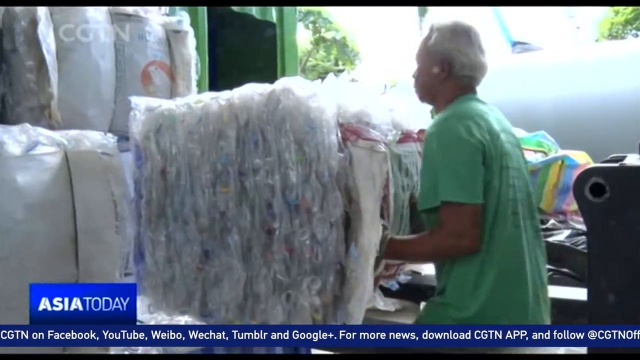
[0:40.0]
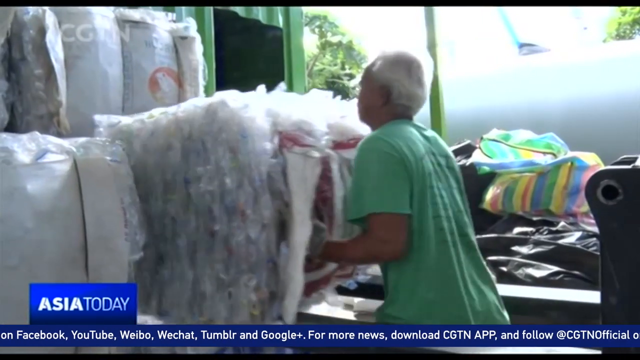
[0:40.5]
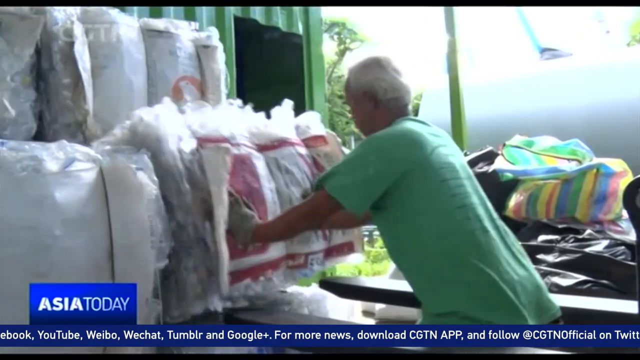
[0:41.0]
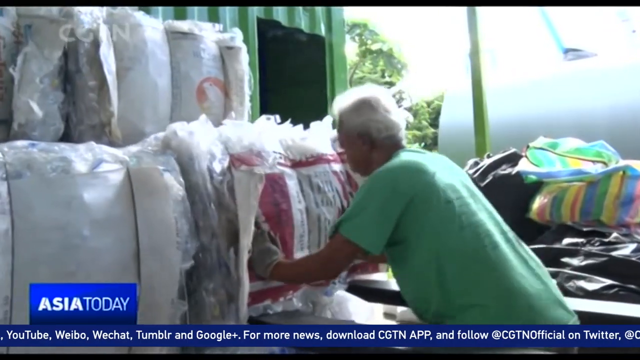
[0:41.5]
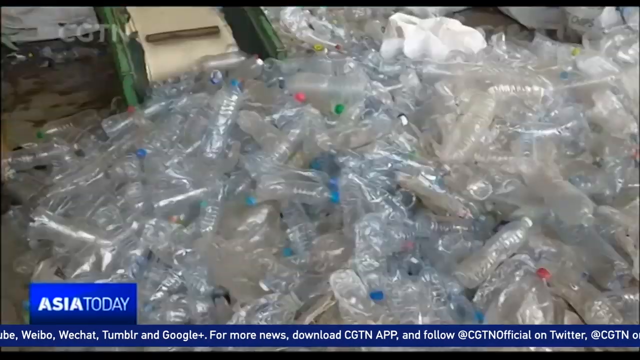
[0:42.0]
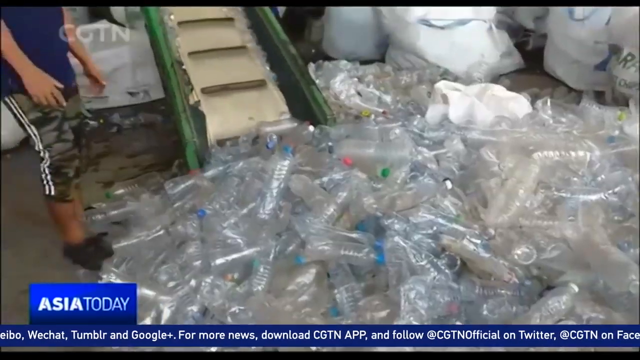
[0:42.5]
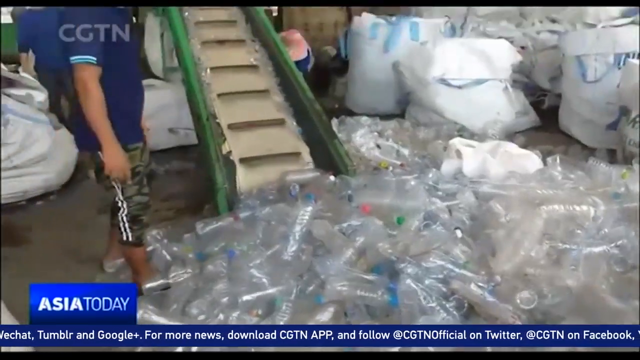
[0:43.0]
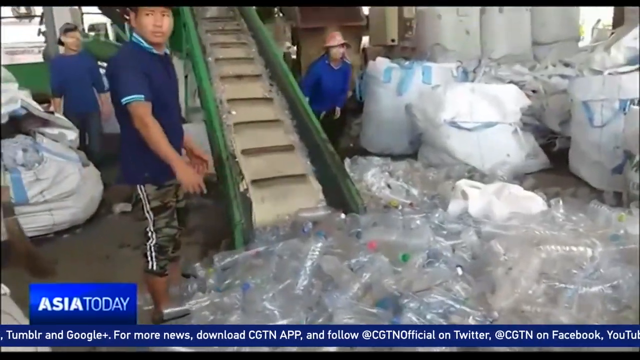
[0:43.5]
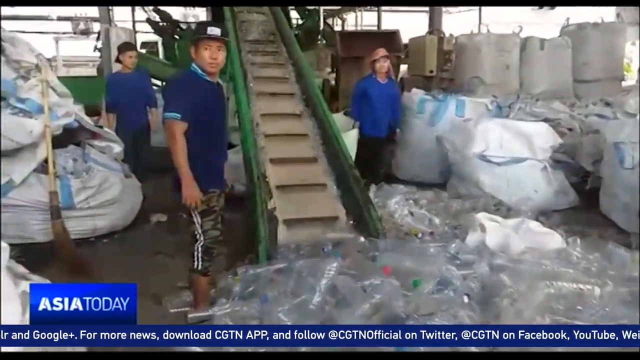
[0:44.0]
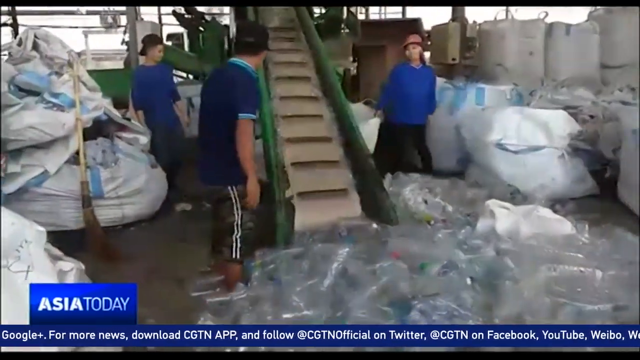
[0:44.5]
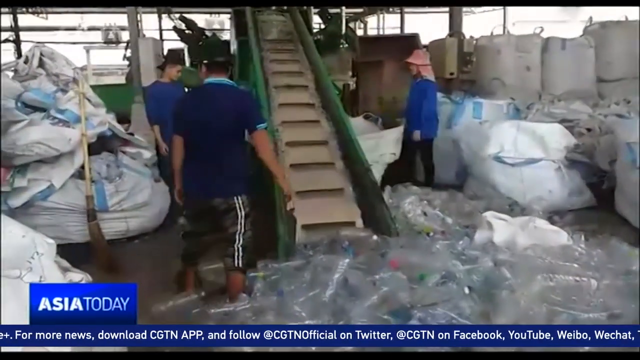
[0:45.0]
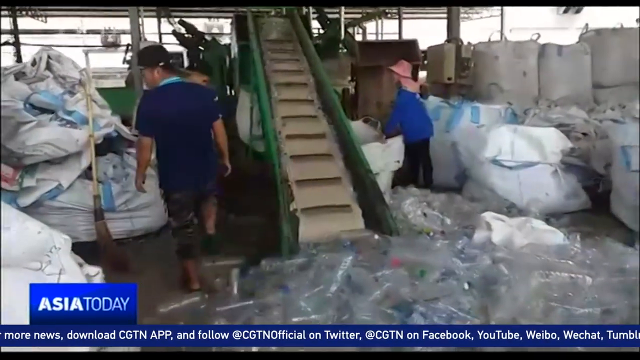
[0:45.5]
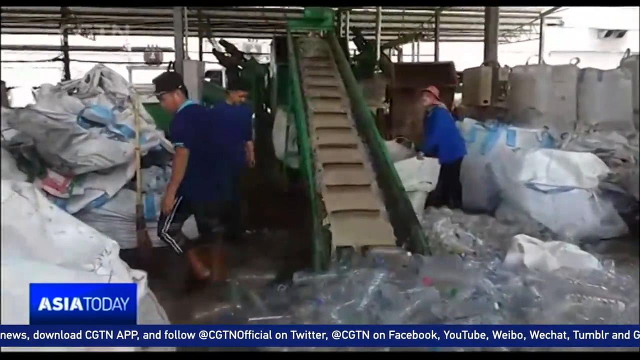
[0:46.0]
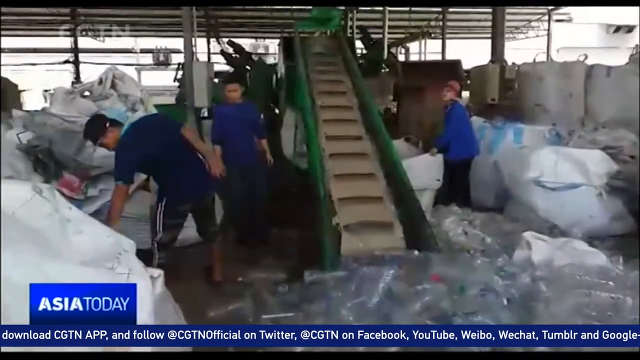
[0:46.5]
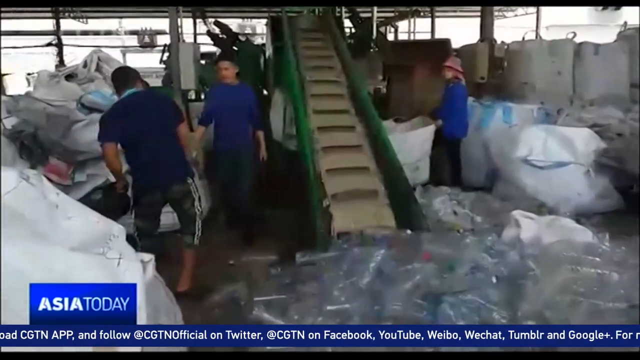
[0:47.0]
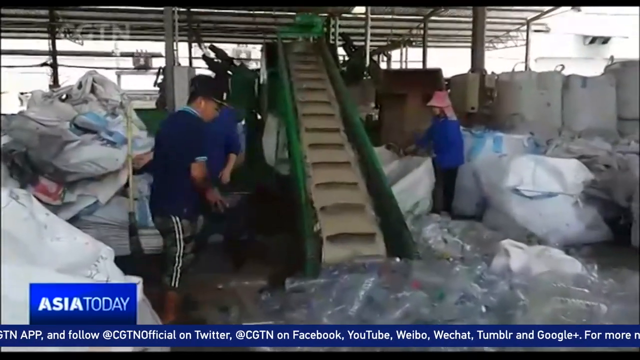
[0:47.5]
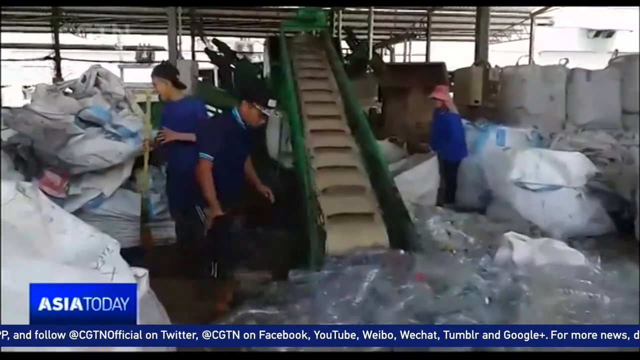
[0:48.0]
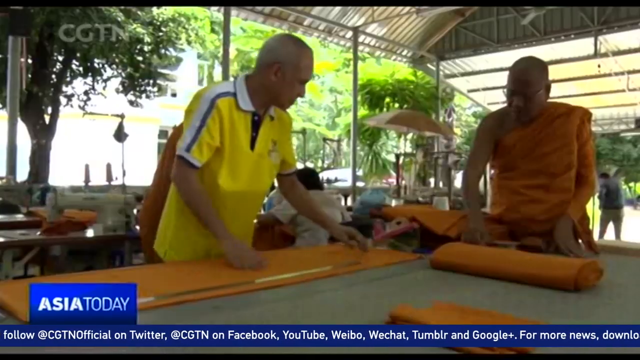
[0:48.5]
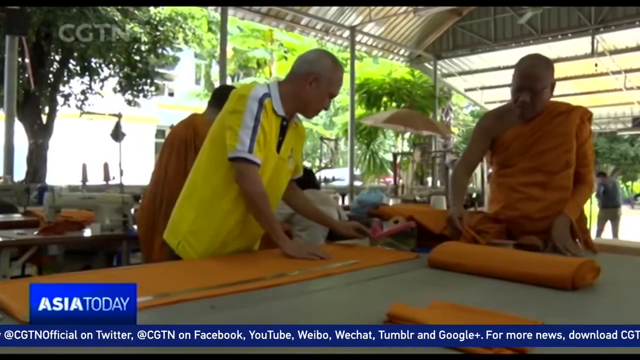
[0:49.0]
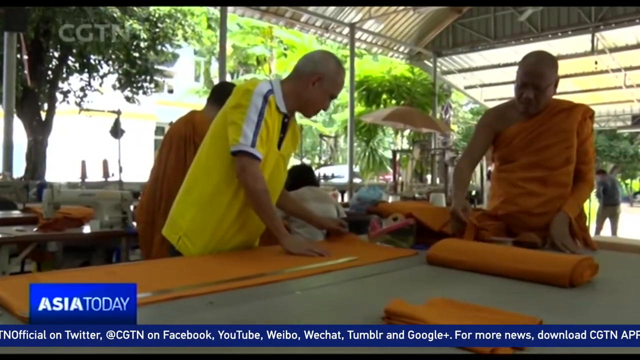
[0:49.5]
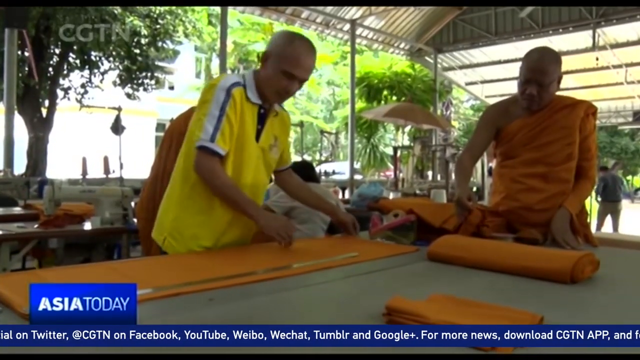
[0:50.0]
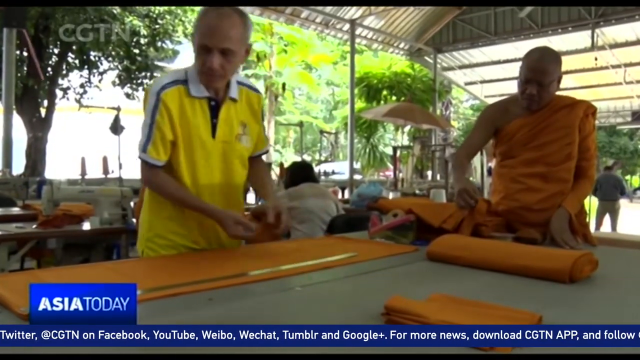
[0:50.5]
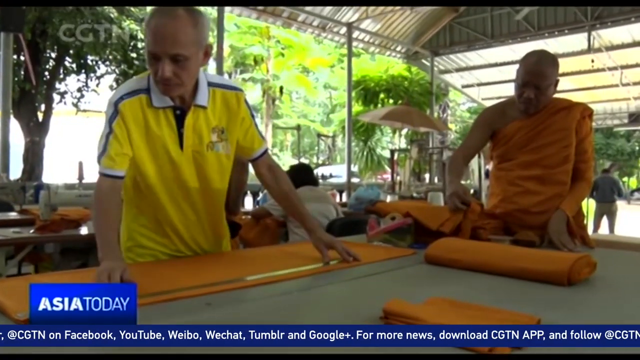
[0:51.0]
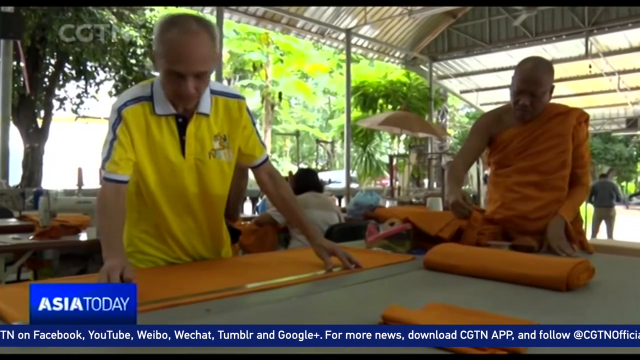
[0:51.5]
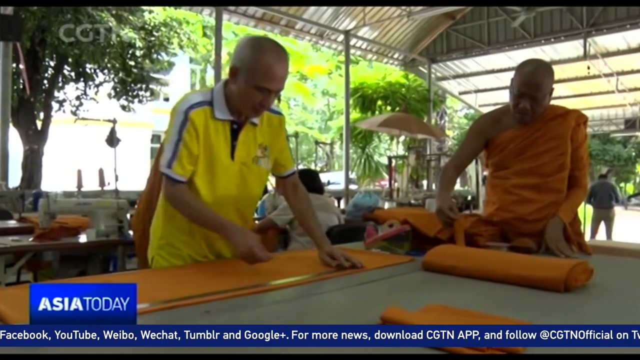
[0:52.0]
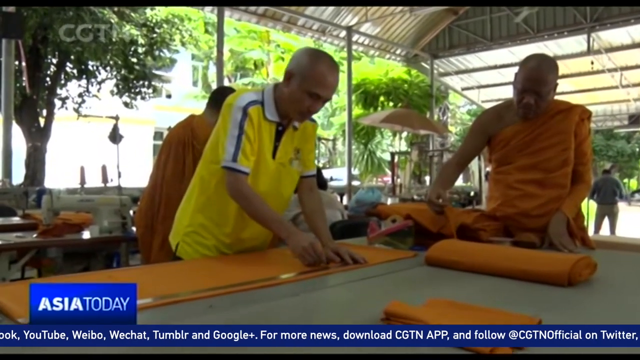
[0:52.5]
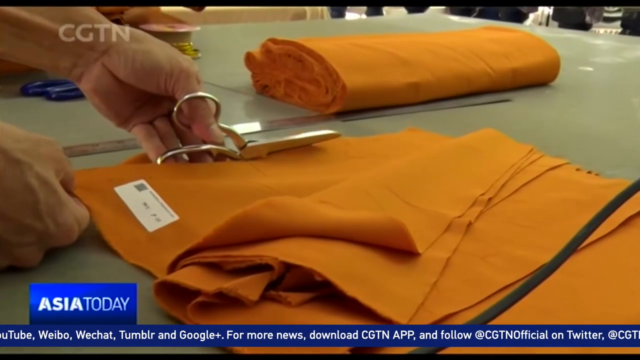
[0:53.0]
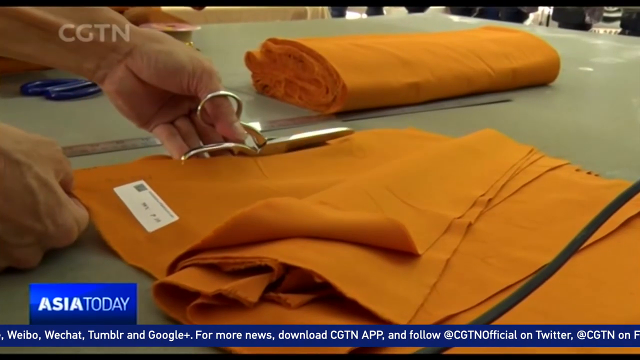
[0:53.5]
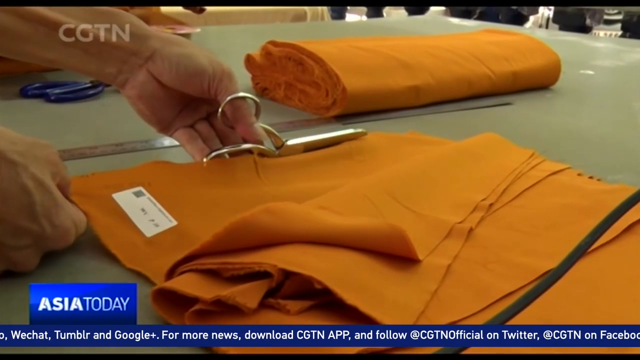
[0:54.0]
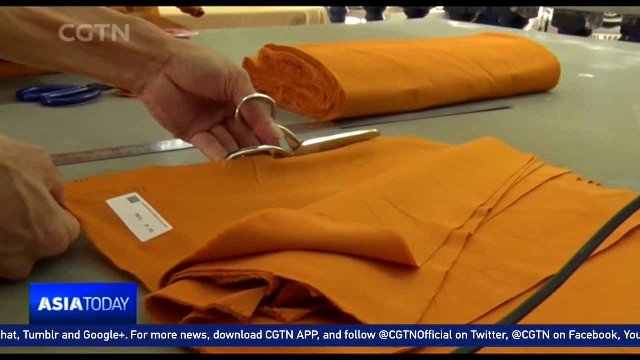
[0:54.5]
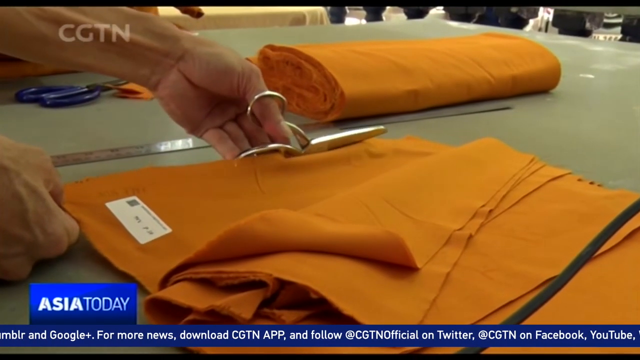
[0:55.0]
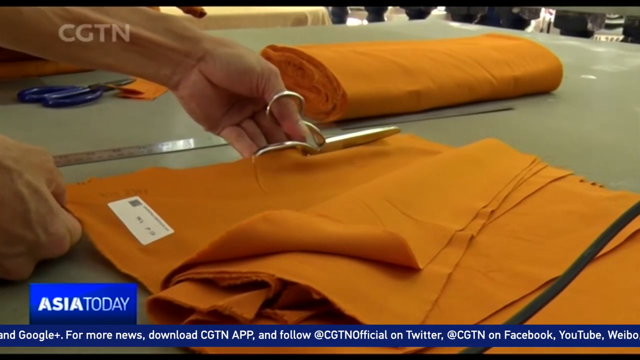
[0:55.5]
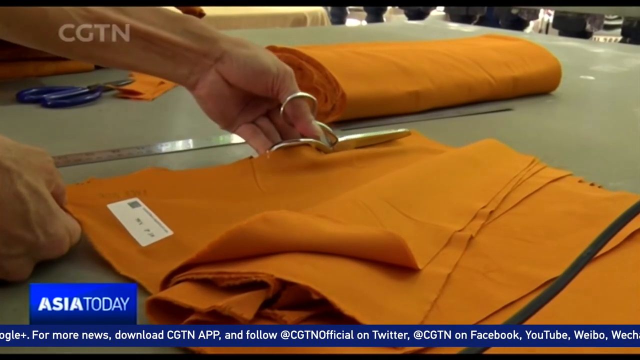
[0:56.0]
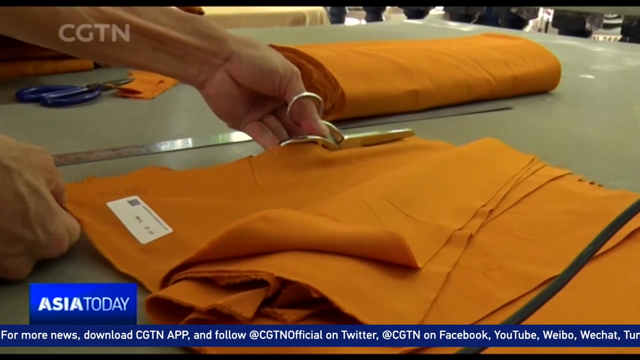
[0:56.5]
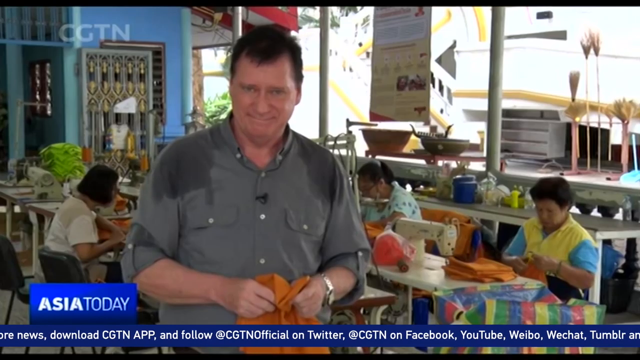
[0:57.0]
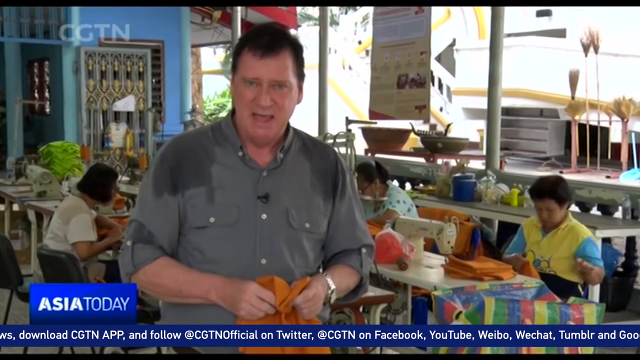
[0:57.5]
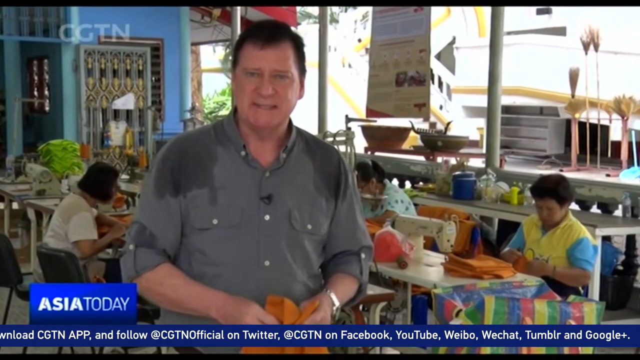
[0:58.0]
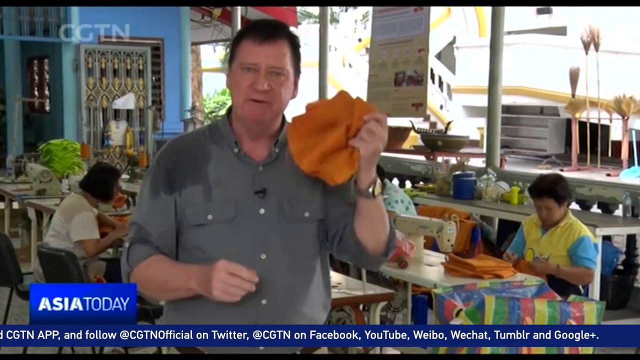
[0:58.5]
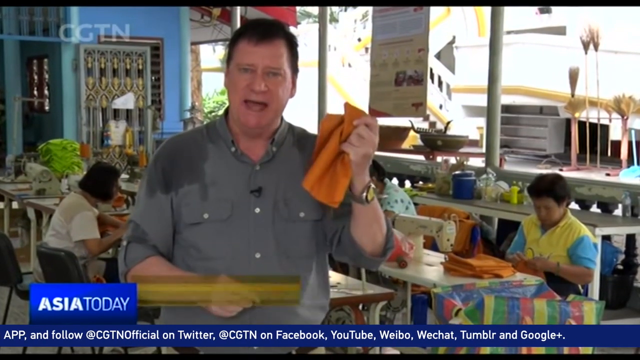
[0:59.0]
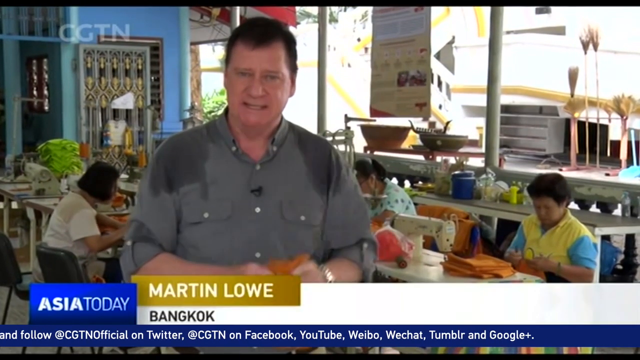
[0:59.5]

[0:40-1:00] Women are seated at tables that hold white sewing machines. The scene moves to a room where a man in a green t-shirt is standing among plastic containers; the room is full of plastic containers that have been put into what look like big sacks. The plastics are first put into a big white plastic bag and then into the big sacks. In the background are trees and a green wall. The man faces to the left while holding a big sack of plastic, which is behind him on his right side, and the background is blurry. On the left side of the screen is a blue background with the text "Asia today".